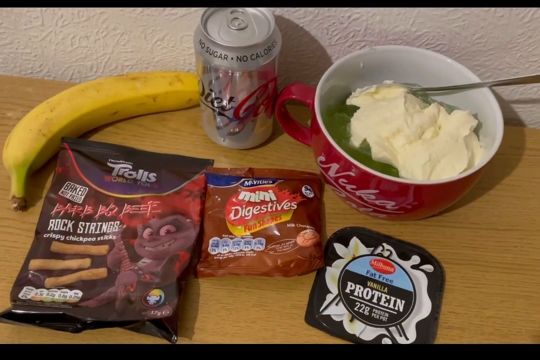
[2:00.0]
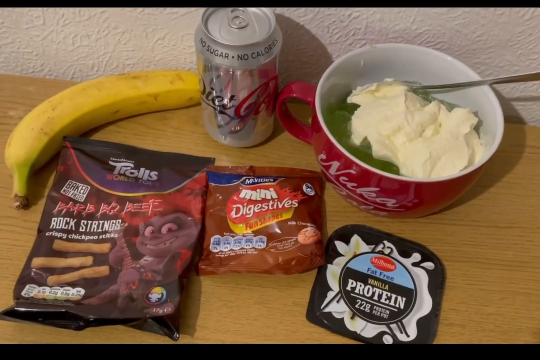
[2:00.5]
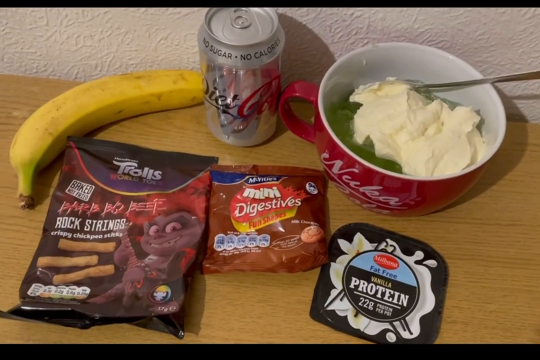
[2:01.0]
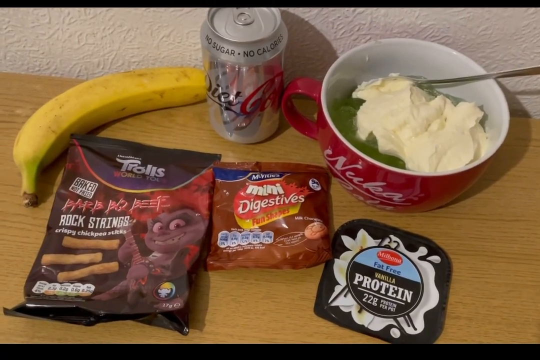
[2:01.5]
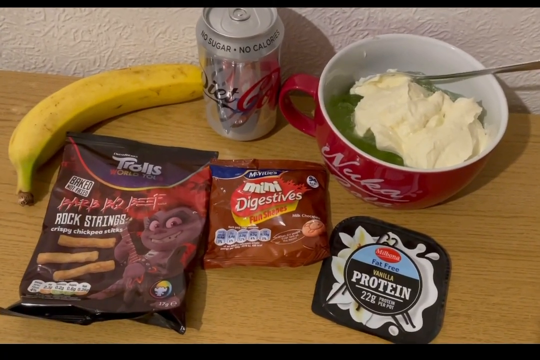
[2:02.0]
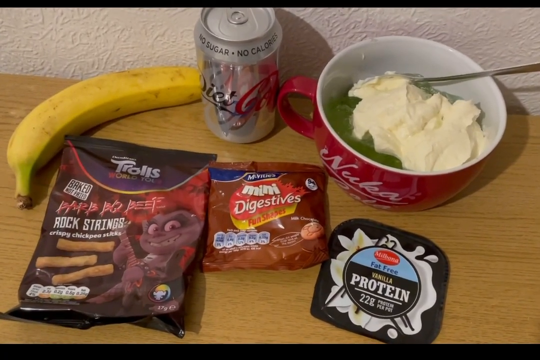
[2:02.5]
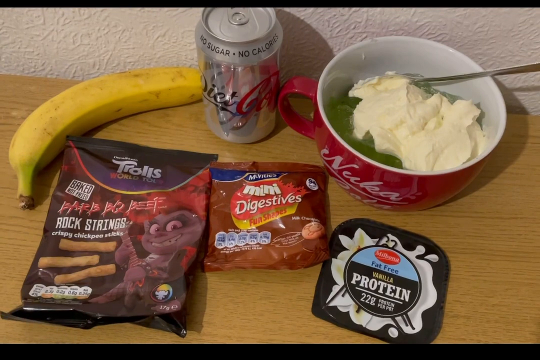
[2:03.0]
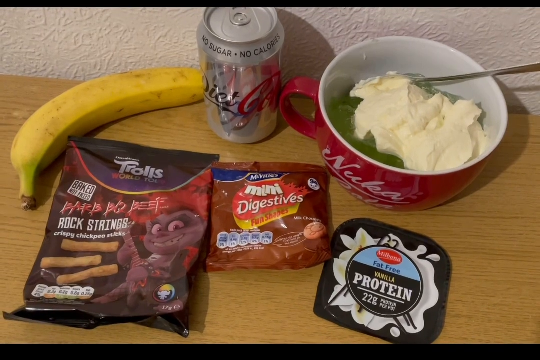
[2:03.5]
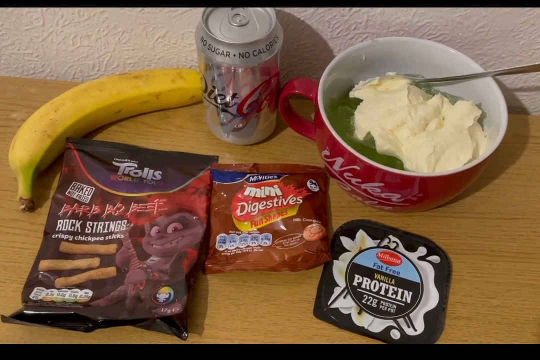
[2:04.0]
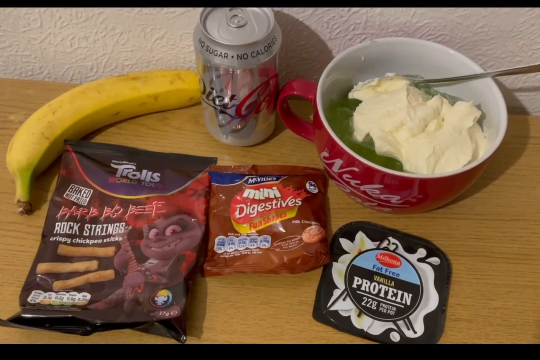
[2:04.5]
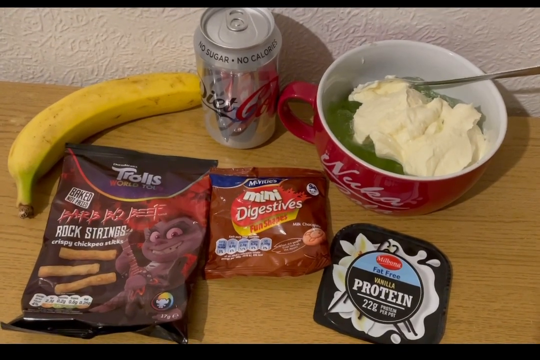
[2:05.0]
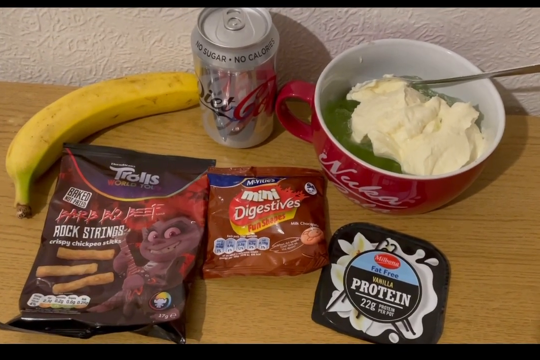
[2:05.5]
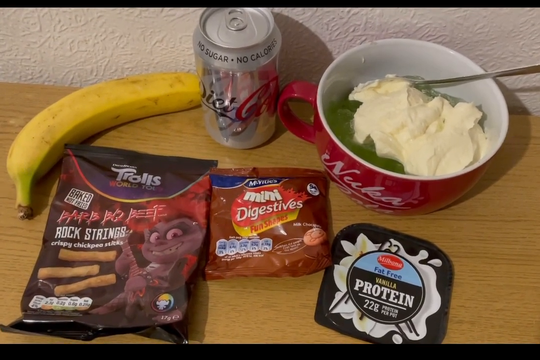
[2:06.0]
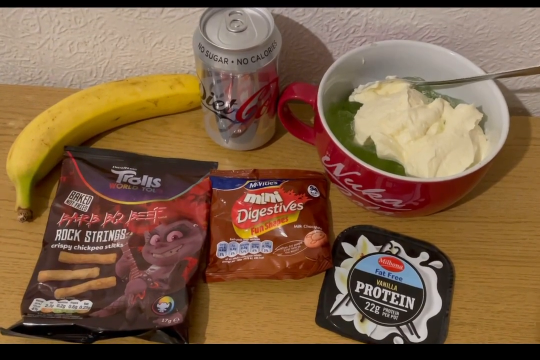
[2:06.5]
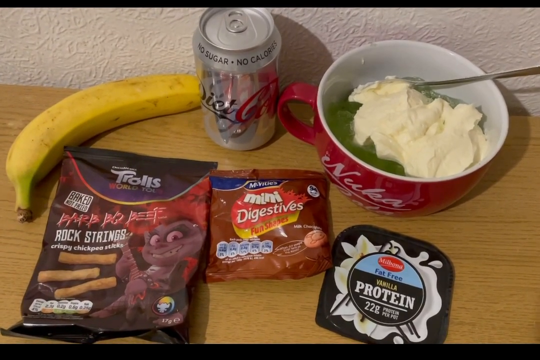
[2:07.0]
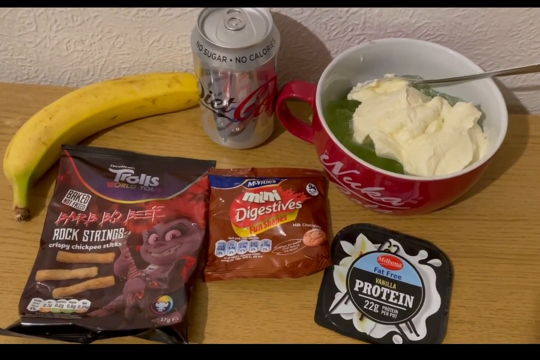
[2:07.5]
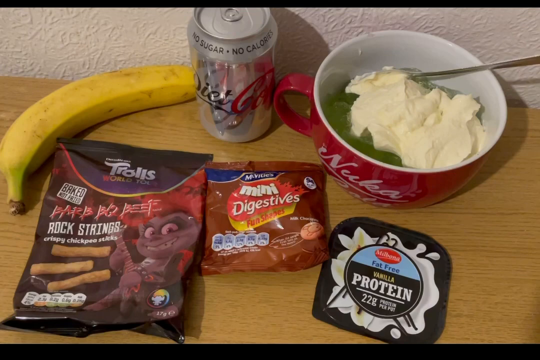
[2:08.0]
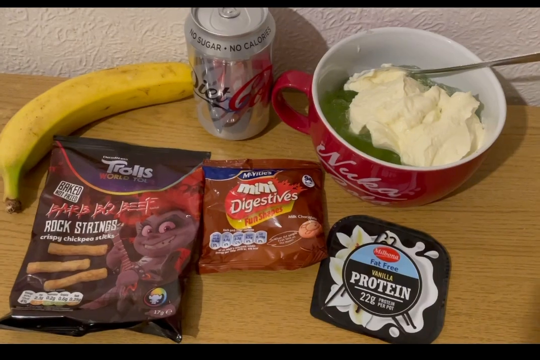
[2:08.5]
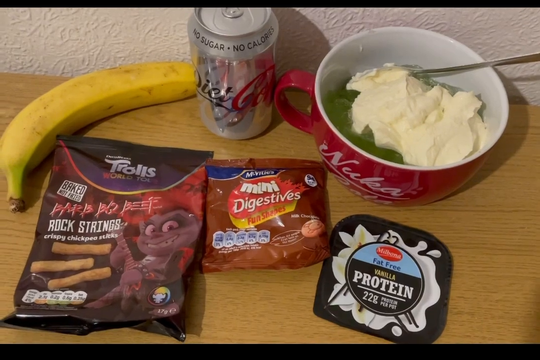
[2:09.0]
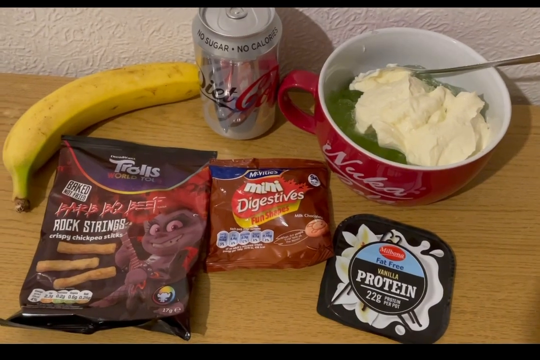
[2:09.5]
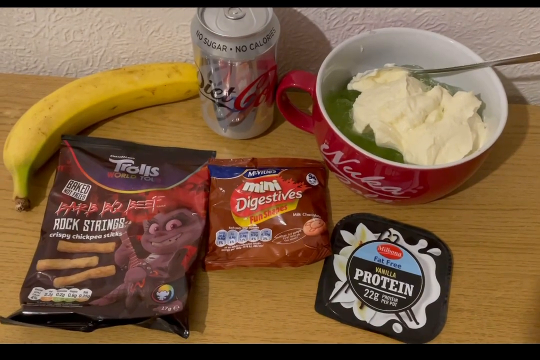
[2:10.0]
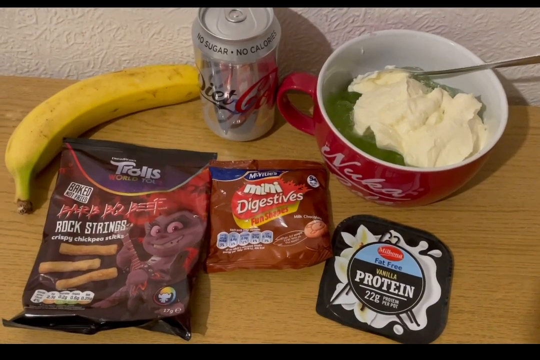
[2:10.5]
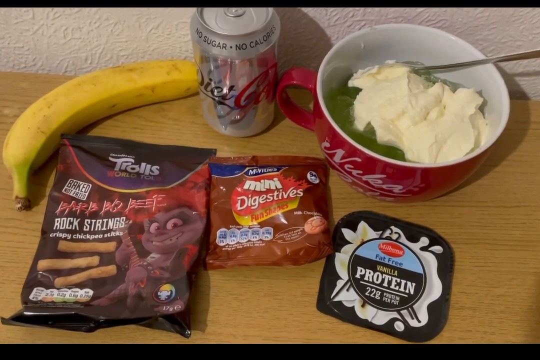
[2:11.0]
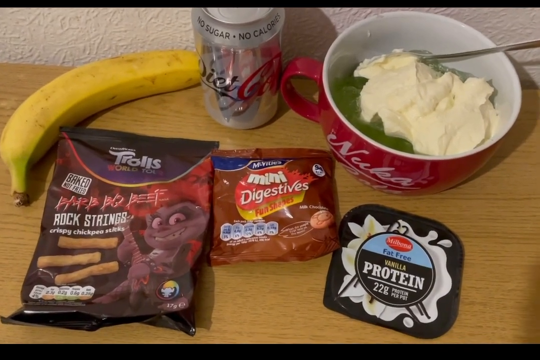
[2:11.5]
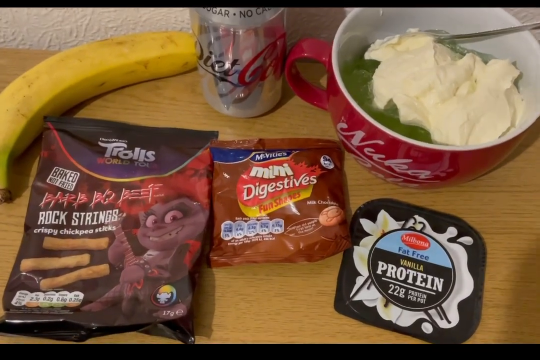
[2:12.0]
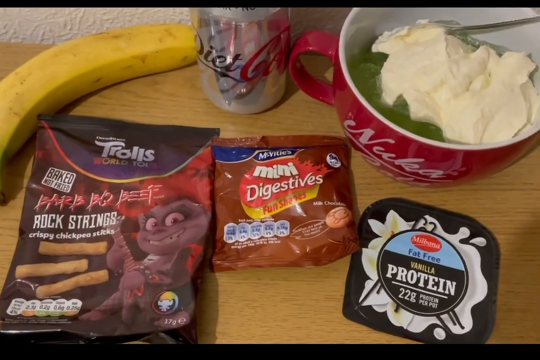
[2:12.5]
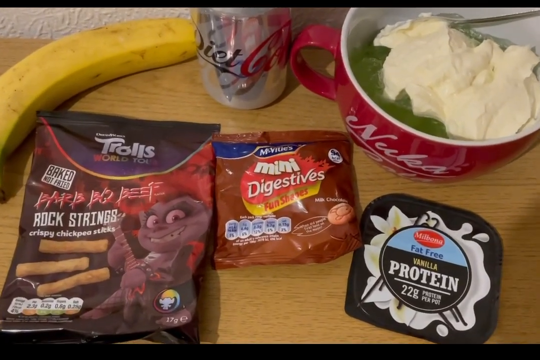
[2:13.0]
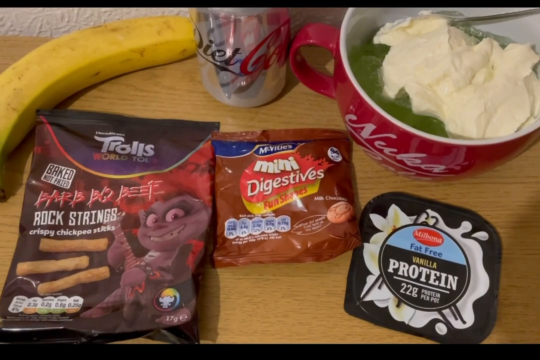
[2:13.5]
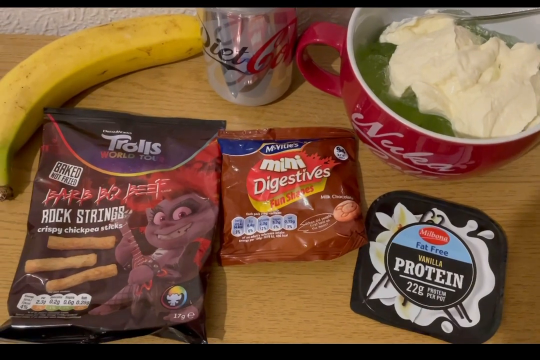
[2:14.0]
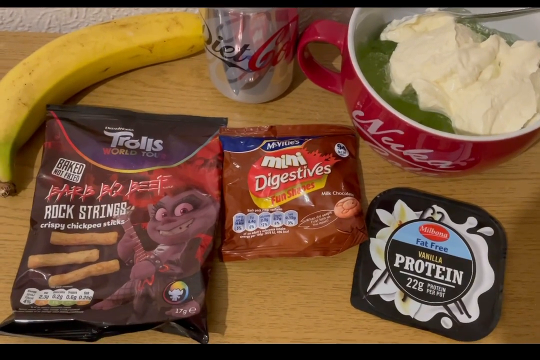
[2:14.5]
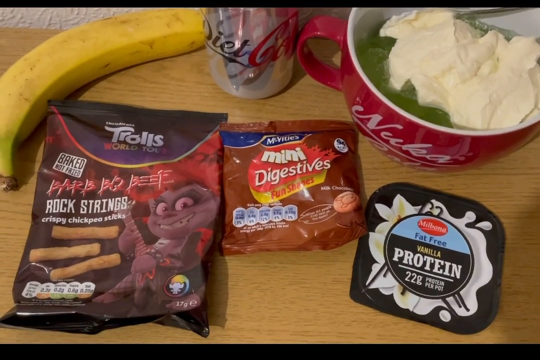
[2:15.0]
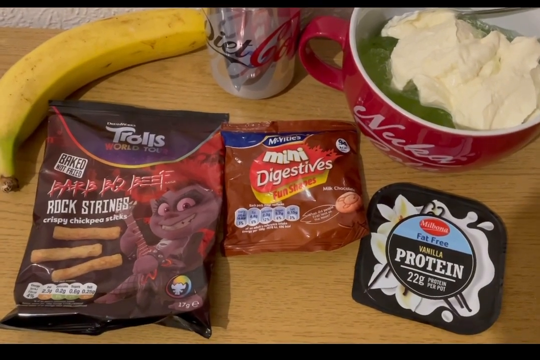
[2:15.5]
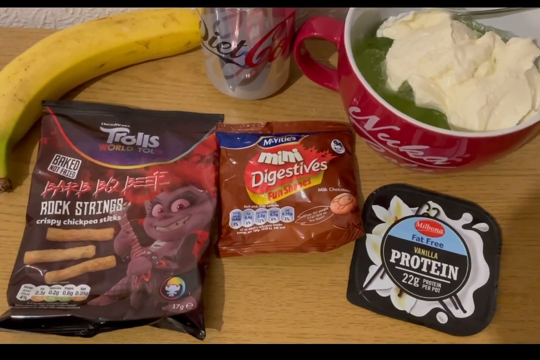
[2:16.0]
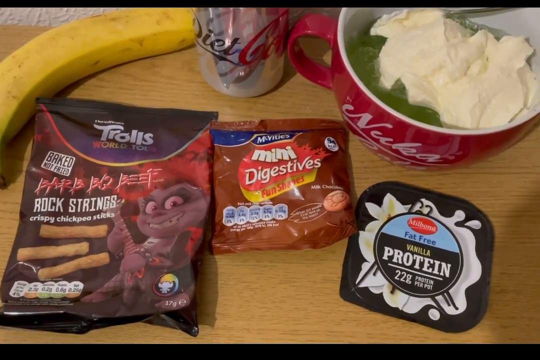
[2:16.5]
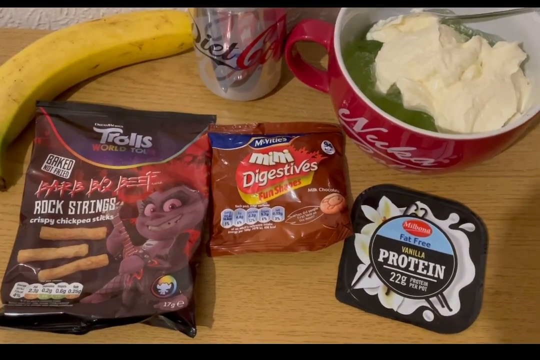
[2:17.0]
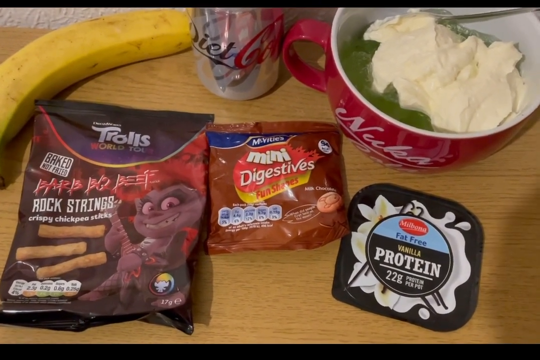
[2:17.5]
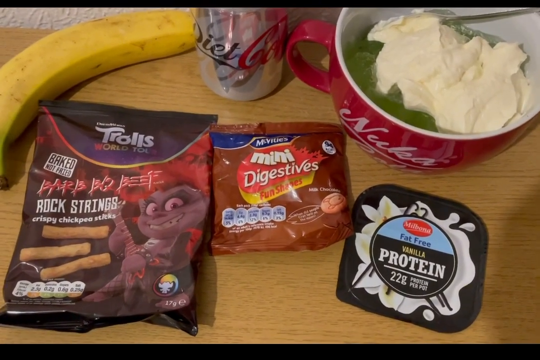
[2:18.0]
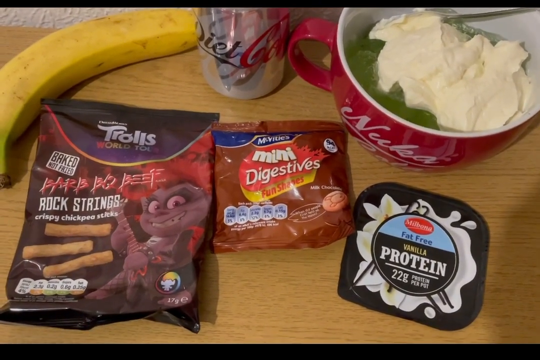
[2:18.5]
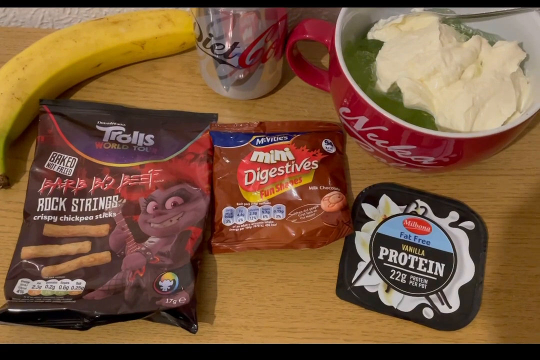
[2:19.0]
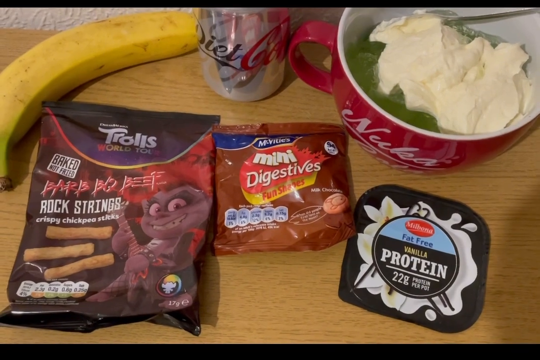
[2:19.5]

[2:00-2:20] The banana does not look particularly ripe; it is still a little green around the area where it would normally be opened. A spoon with a long handle is sticking into the cup; the end of the handle cannot be seen, as it is kind of submerged in whatever is in the cup. The snack bags take centre stage on the worktop. There is a packet of McVitie's mini digestives: "McVitie's" is in white font on a blue background, "mini digestives" is in white font on a red background, and "fun shapes" is in red font on a yellow background. At the bottom left of the packet is some nutritional information, and at the bottom right is an image of what the fun shapes might look like. There is also a pack of Trolls, another snack, and the camera closes in on it. It appears to read "barb bq beef", spelled b-a-r-b and bq, and describes them as "crispy chickpea sticks". A white label on the top left of the packaging has black text saying "baked not fried", and there is nutritional information on the bottom left of the bag.